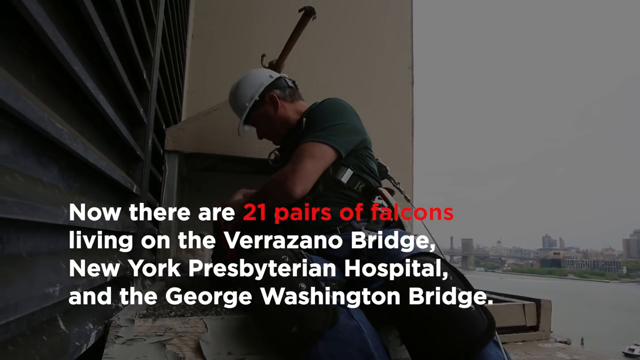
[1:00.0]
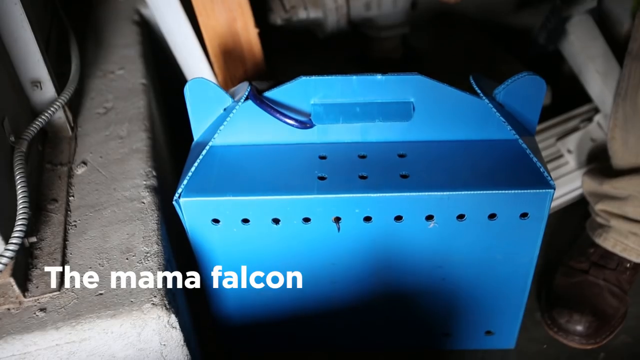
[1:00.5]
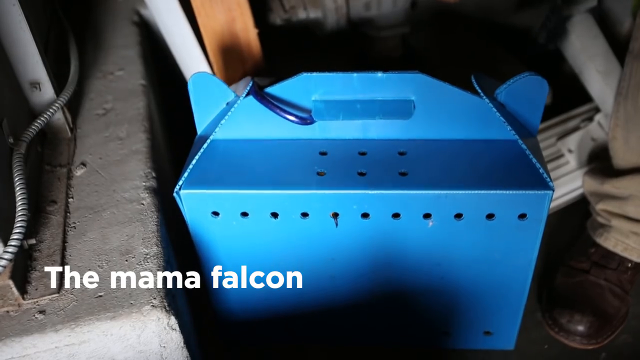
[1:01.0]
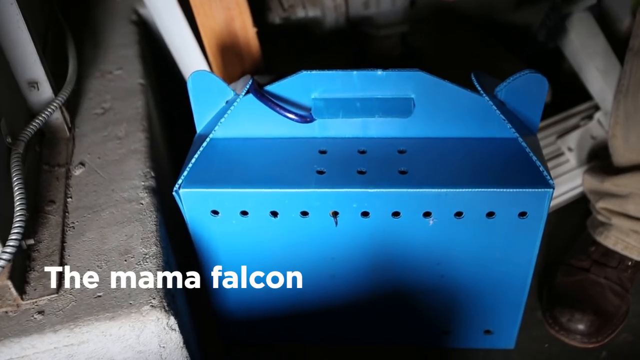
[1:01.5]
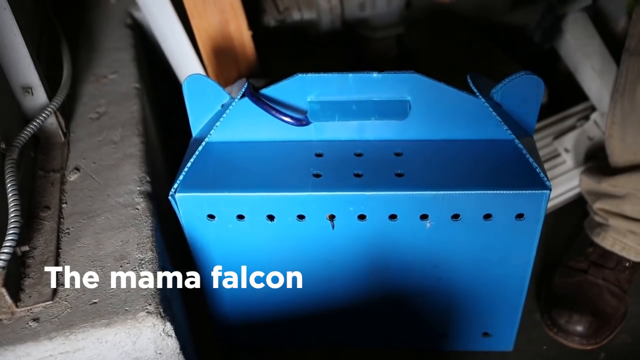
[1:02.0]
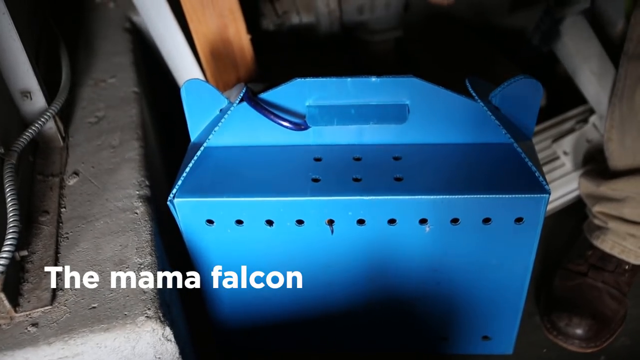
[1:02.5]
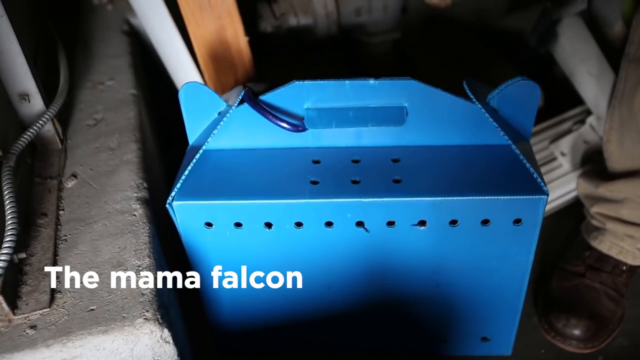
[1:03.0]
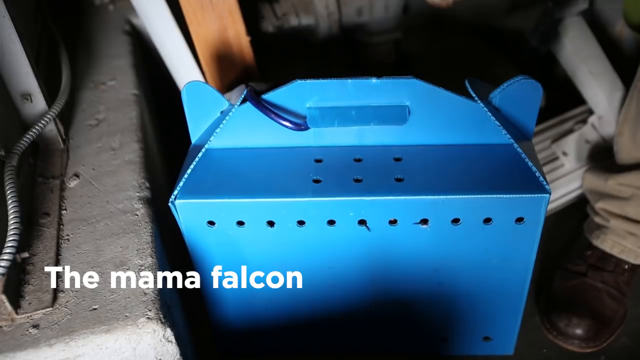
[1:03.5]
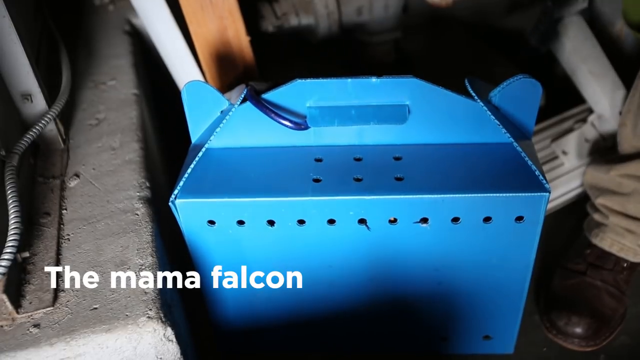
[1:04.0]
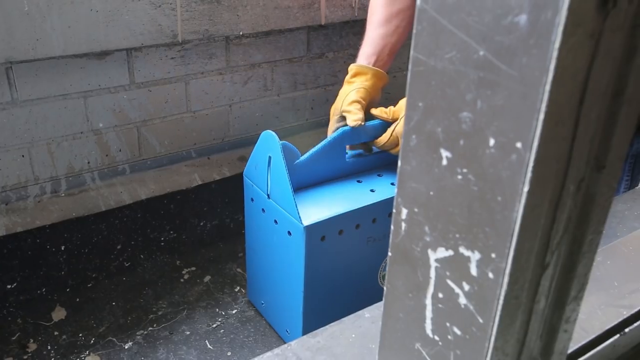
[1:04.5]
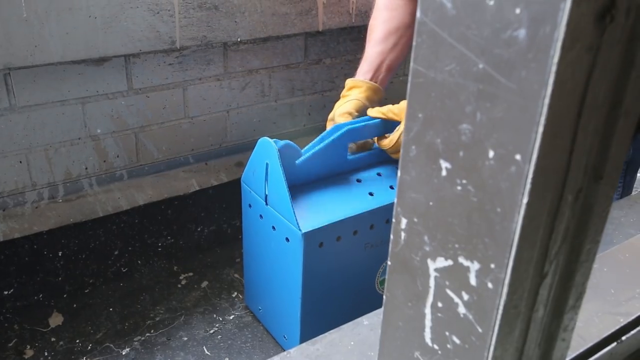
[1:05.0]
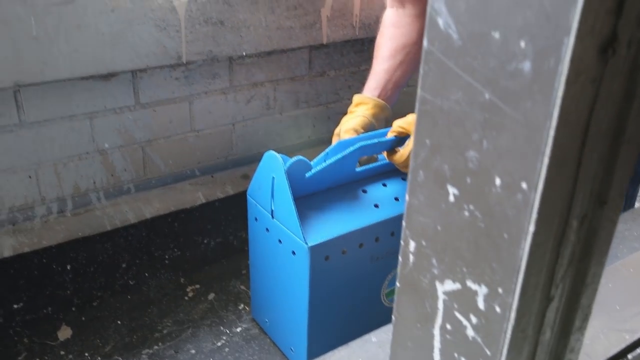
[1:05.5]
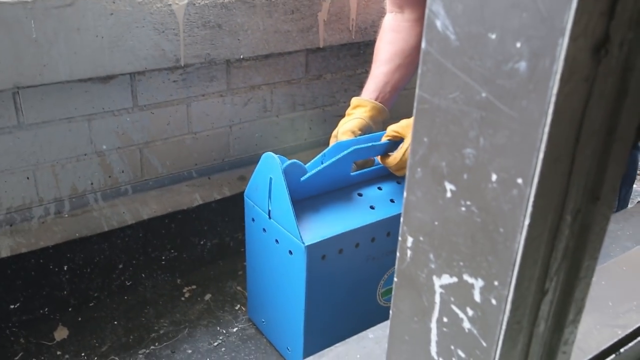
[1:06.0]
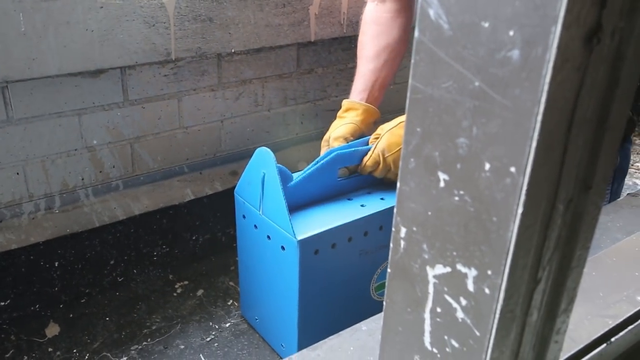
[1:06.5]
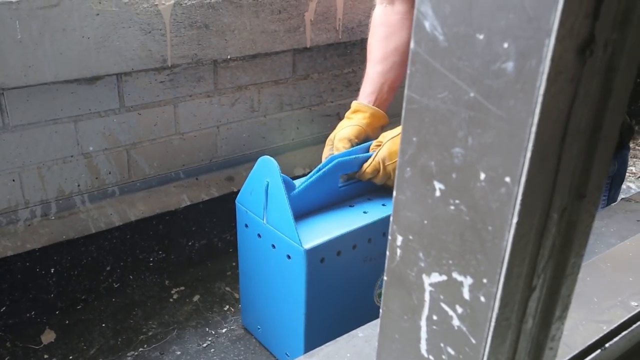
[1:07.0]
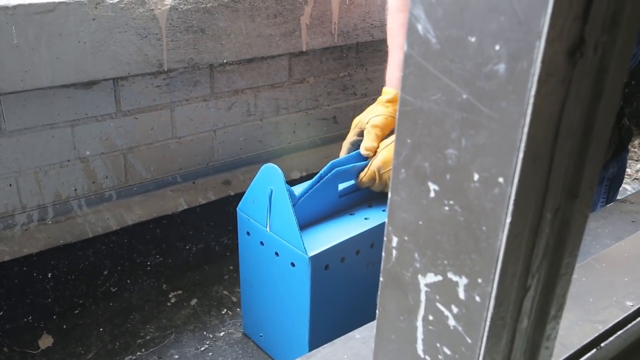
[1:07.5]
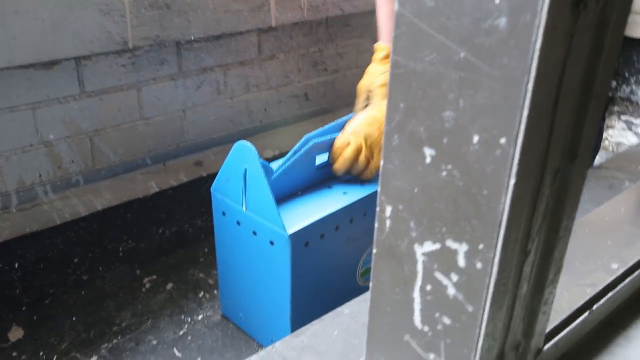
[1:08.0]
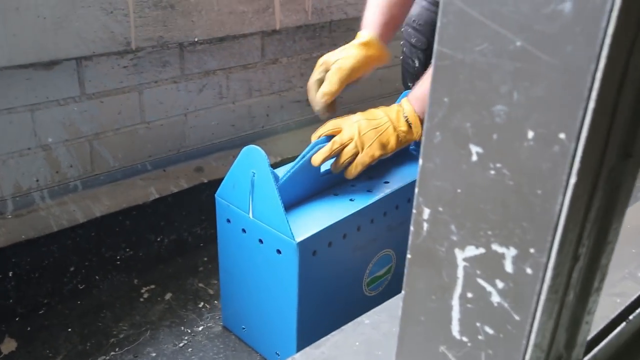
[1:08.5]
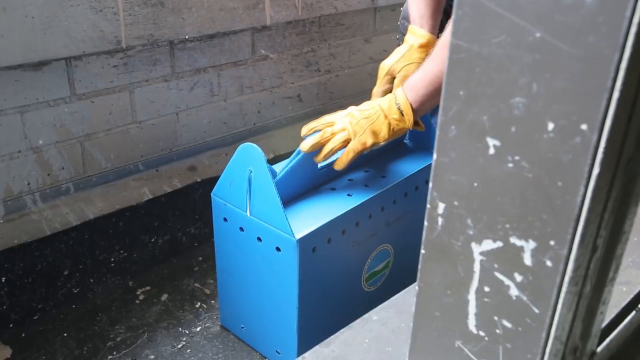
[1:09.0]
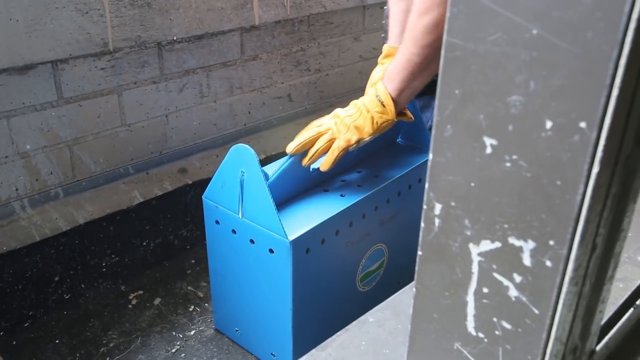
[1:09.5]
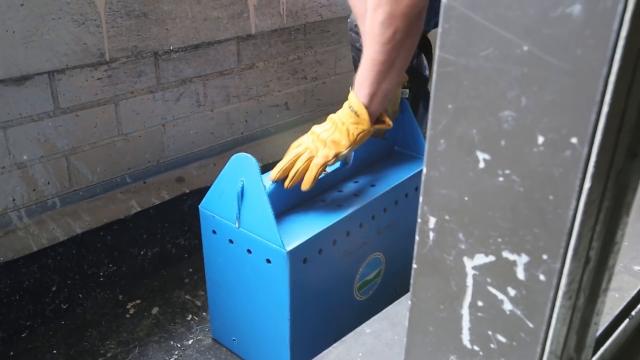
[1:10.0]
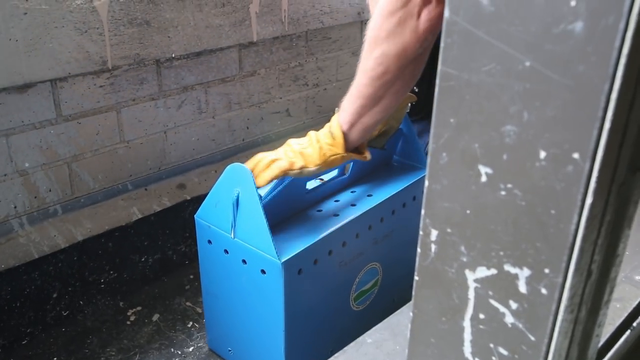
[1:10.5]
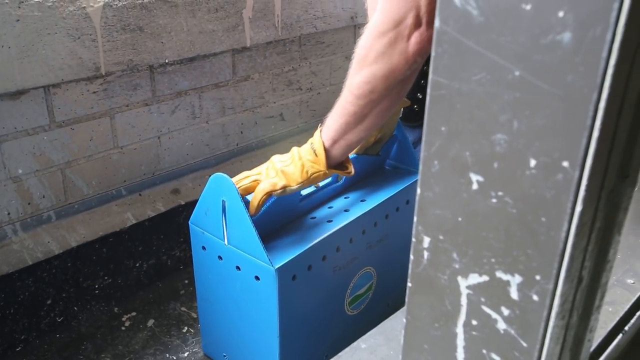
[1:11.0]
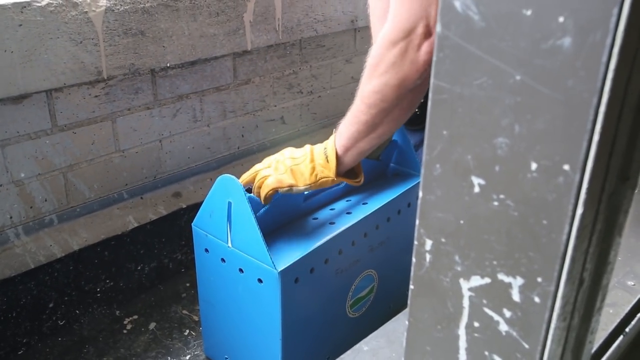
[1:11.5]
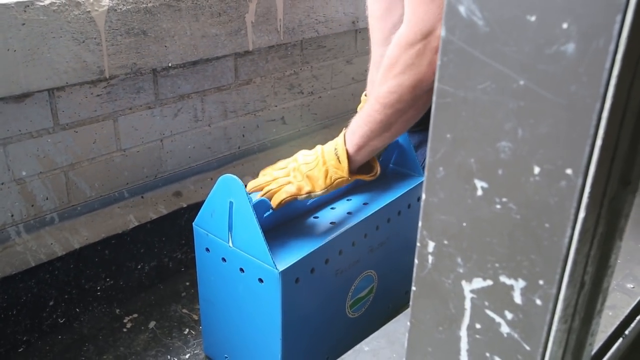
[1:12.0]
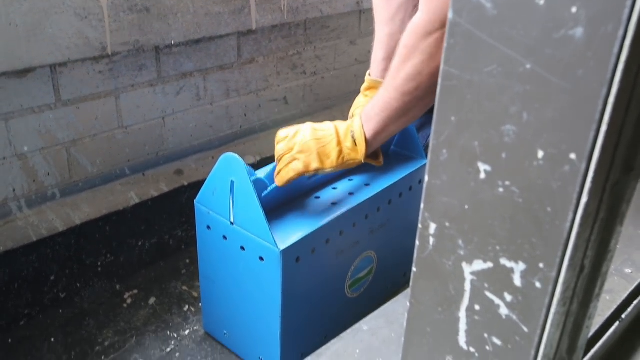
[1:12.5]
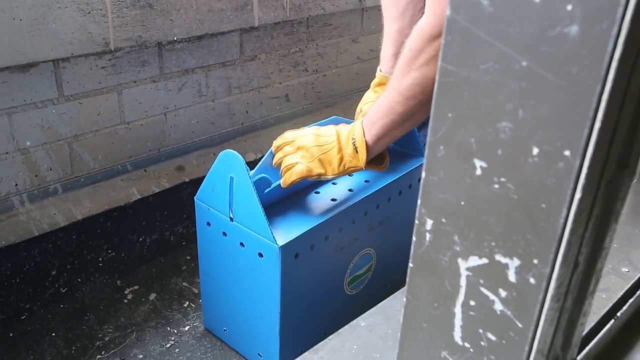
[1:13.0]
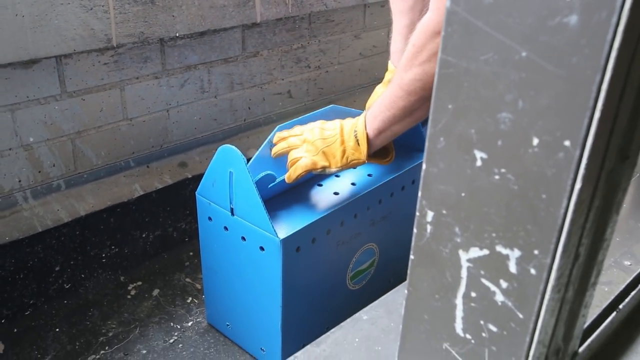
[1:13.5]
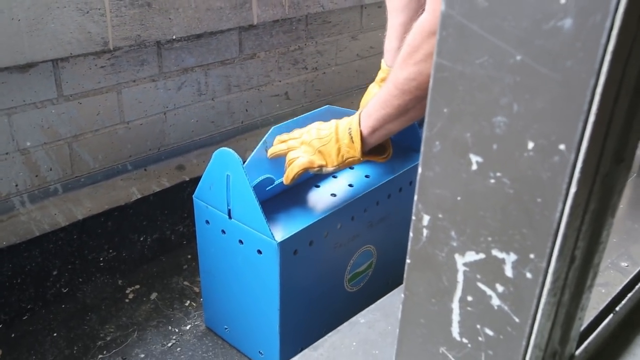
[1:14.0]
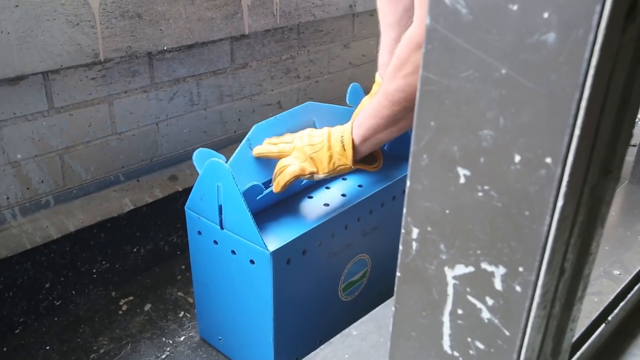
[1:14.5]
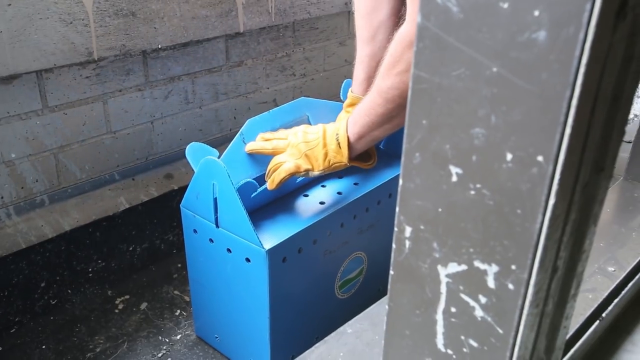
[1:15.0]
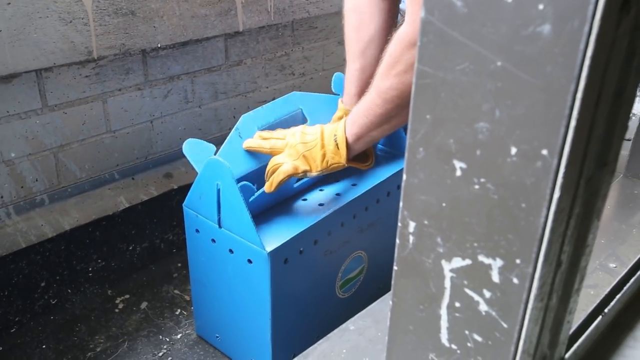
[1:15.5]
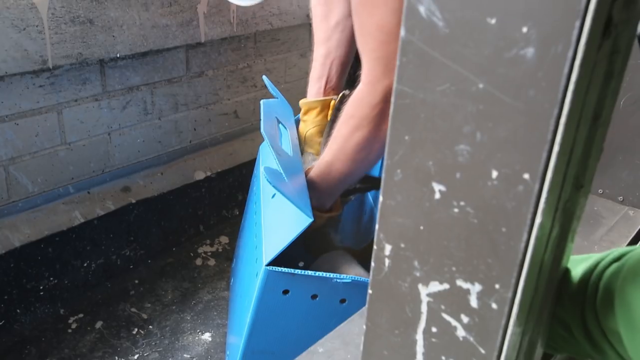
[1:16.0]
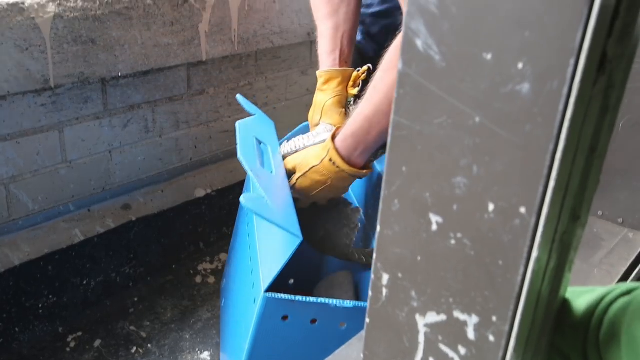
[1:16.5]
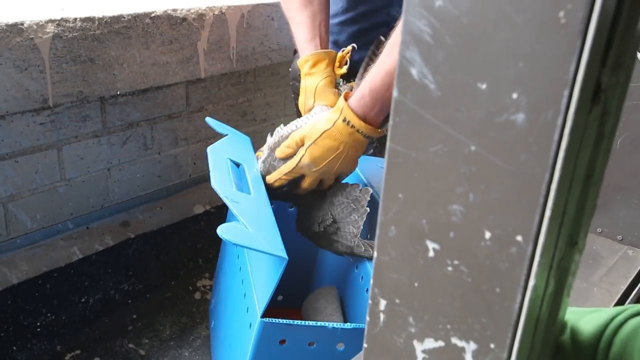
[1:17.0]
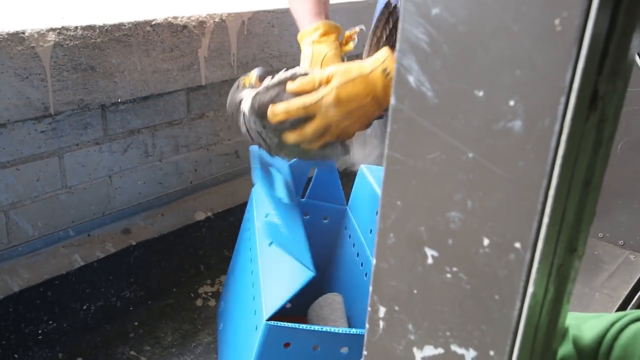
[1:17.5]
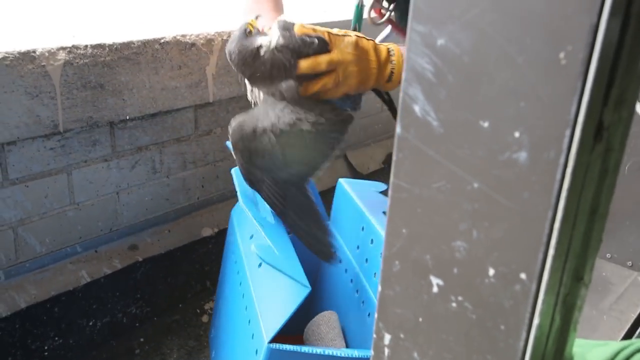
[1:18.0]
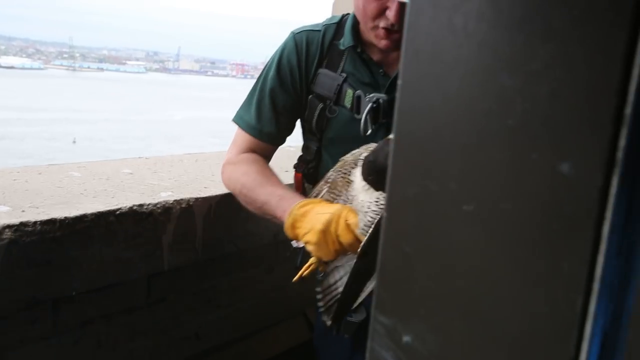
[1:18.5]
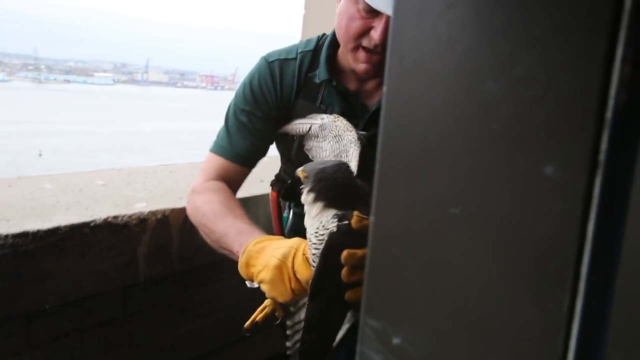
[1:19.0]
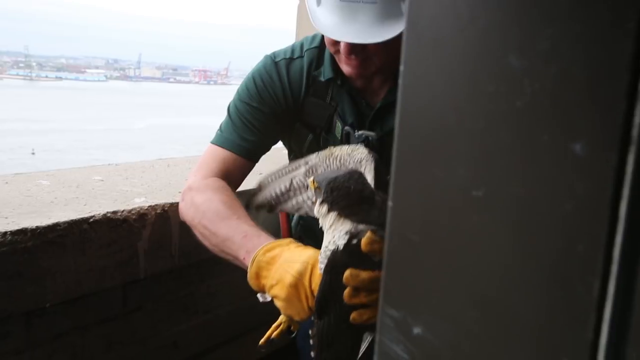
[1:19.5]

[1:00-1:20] A man sits on what looks like a ledge on a building, with on-screen text reading, "Now there are 21 pairs of falcons living on the Verrazano Bridge, New York Presbyterian Hospital, and the George Washington Bridge." The scene switches to a blue box that looks like a carrier box for animals, with text at the bottom of the screen reading "The mama falcon" as the box appears to shake. The camera angle switches to someone's hands in yellow gloves opening the top of the box; as they slowly open it, they reach in and pull out an adult peregrine falcon. Briefly, a man wearing a white hard hat and a green shirt holds the falcon up and appears to inspect it.